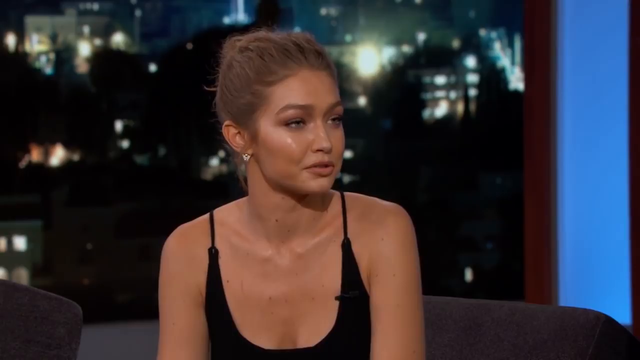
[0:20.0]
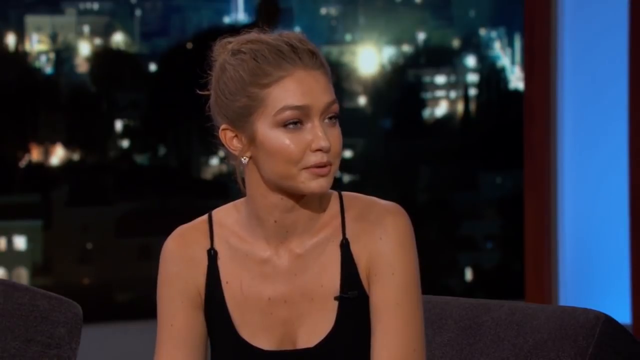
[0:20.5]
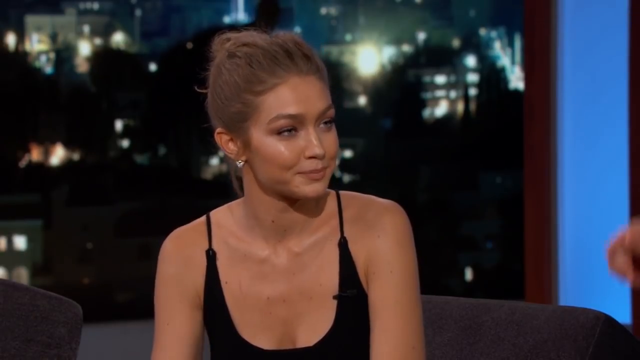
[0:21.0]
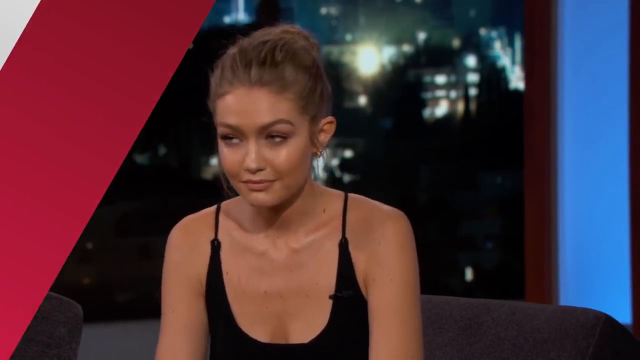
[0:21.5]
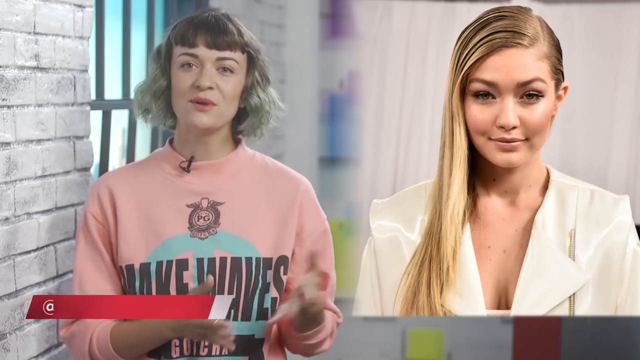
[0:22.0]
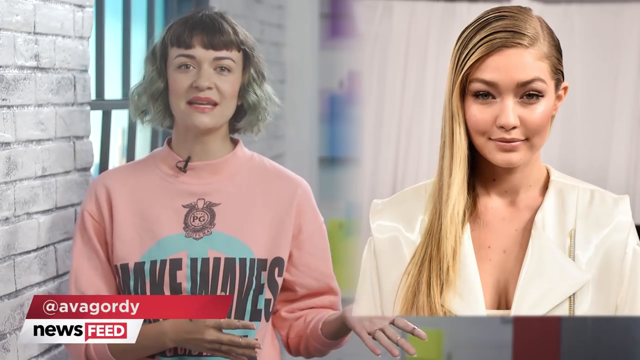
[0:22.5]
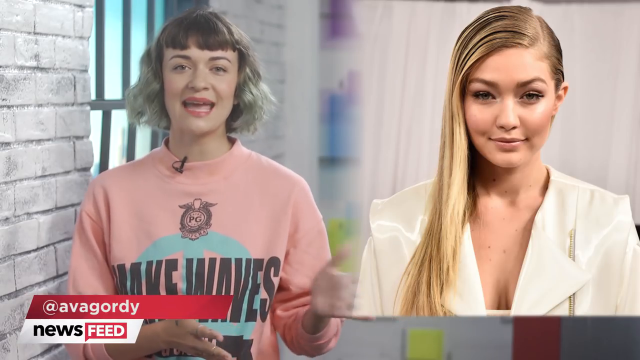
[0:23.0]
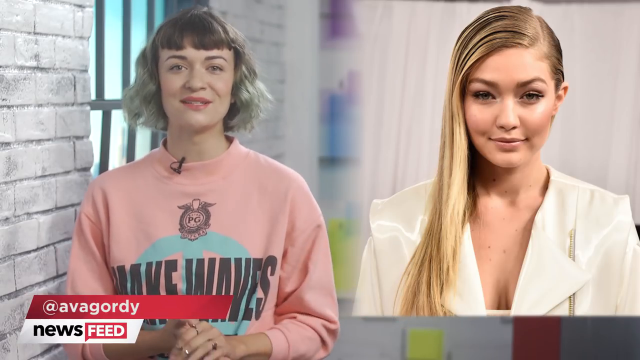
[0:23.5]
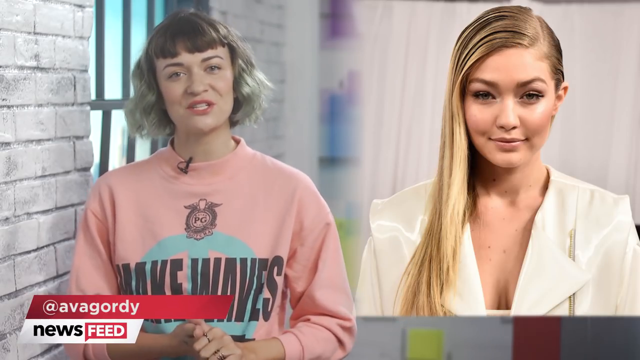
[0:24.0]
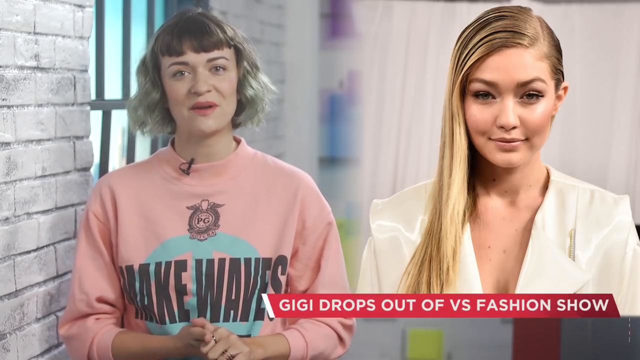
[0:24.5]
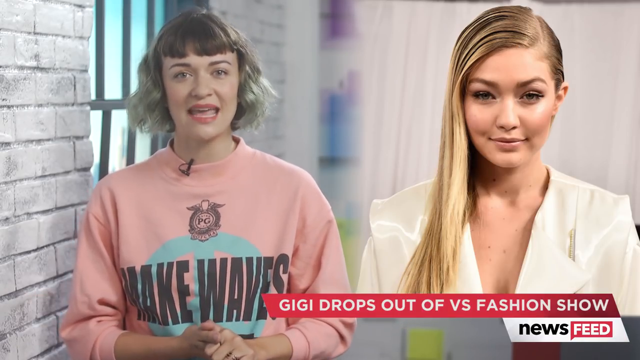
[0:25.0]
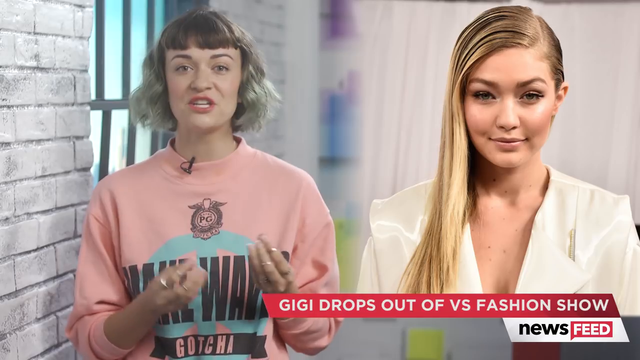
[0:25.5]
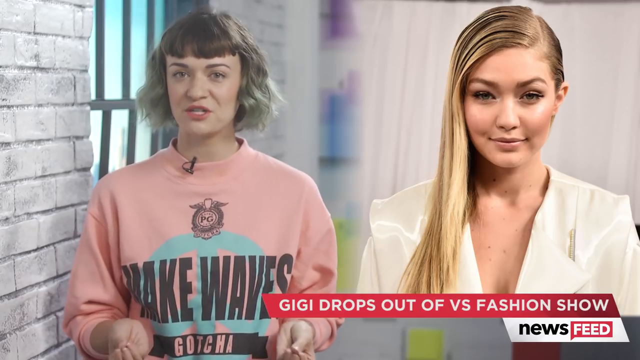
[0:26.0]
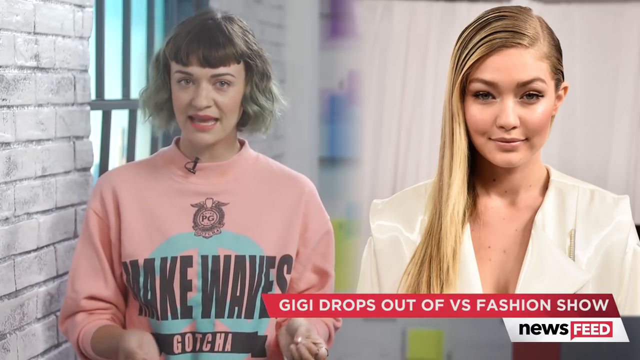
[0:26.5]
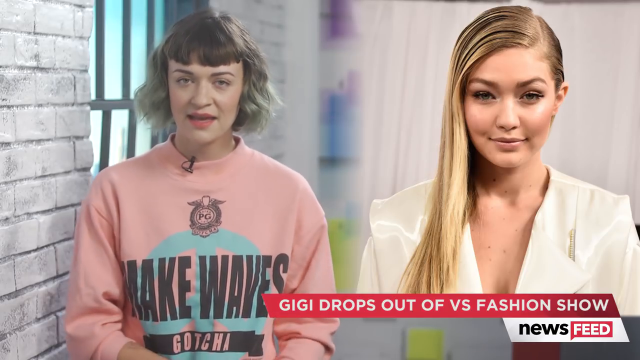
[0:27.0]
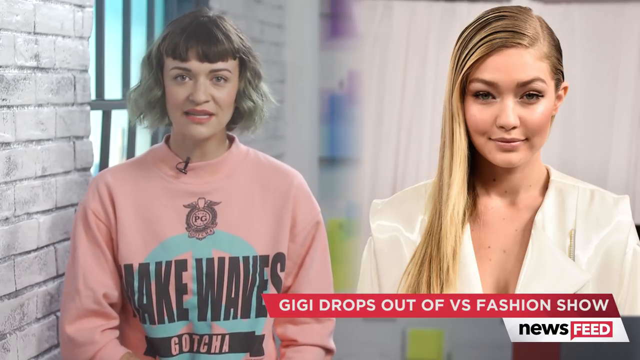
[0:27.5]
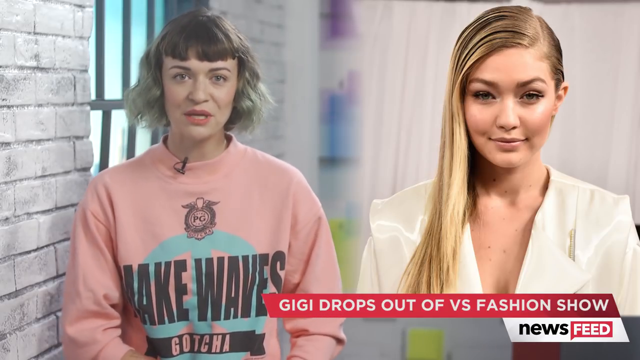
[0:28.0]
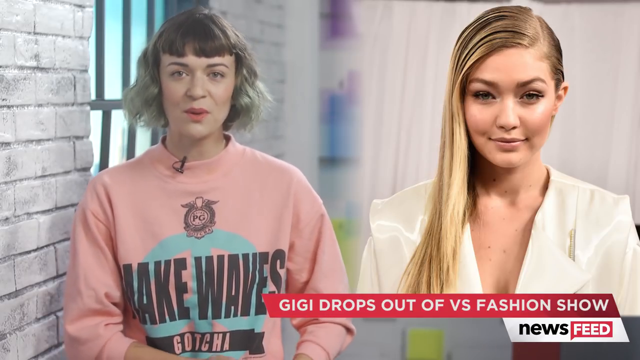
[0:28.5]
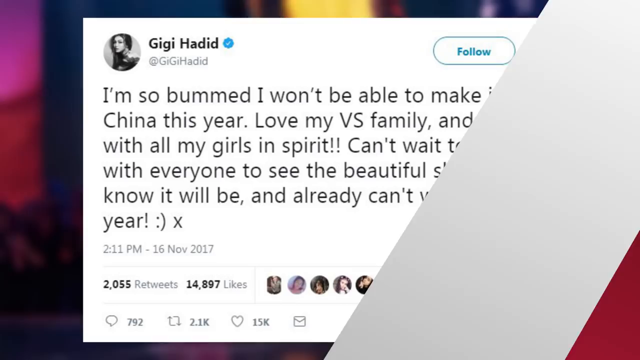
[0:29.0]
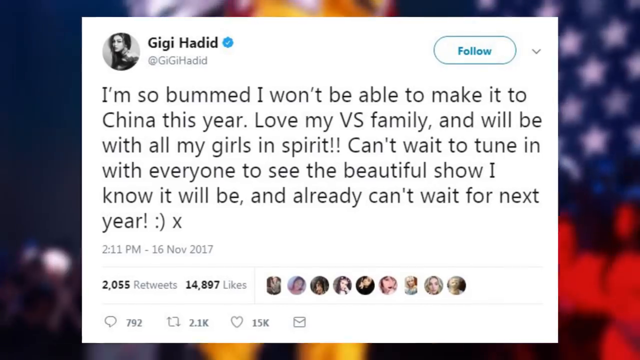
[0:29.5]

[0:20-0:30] The brown-skinned model is being interviewed, her head turned slightly to the right, wearing a dress with just straps over her shoulders. She turns her head back to the left as the shot transitions to a screen showing the woman in the sweatshirt on the left side. To her right is a picture of a woman with blonde hair parted on the right side and combed over to the left, coming down over her shoulder, wearing a white suit with fairly large shoulders. A banner at the bottom reads "@ Ava Gordy News Feed". The woman on the left talks quickly, her mouth moving a lot, while the one on the right is just a picture. Another banner pops up at the bottom right reading "Gigi drops out of VS Fashion Show". The woman keeps talking, moving her hands around quite a bit while looking straight ahead. The video then moves to a social media post with "Gigi Hadid" at the top and the text: "I'm so bummed I won't be able to make it to China this year. Love my VS family and will be with all my girls in spirit. Can't wait to tune in with everyone to see the beautiful show. I know it will be and already can't wait for next year."